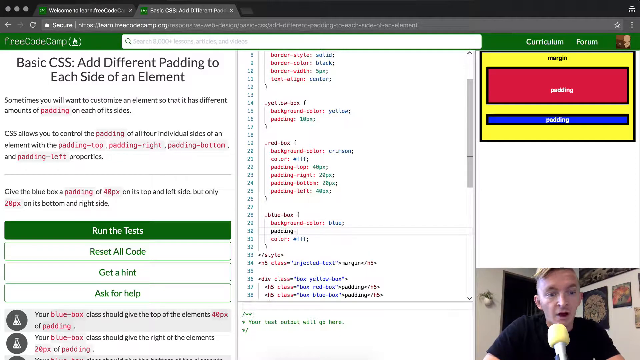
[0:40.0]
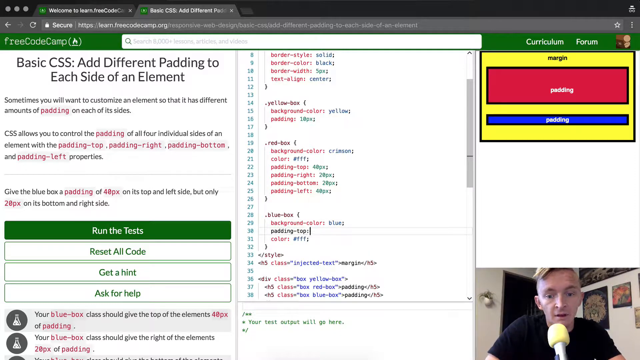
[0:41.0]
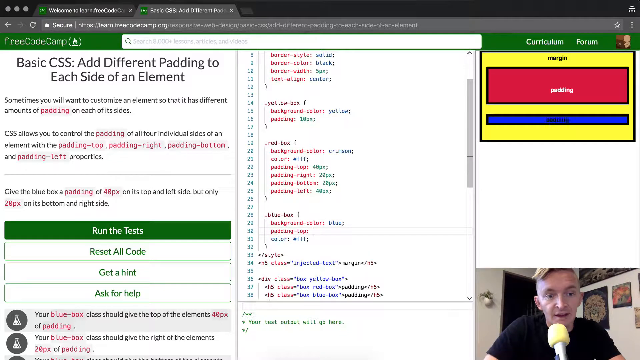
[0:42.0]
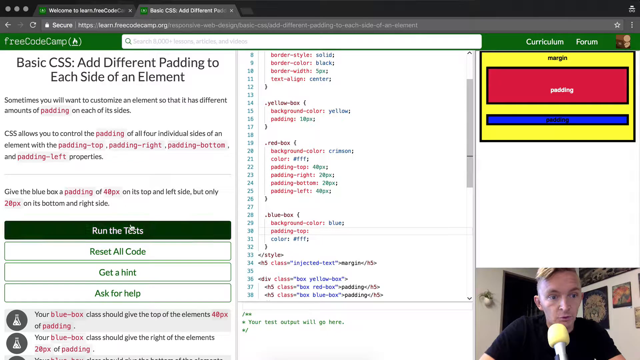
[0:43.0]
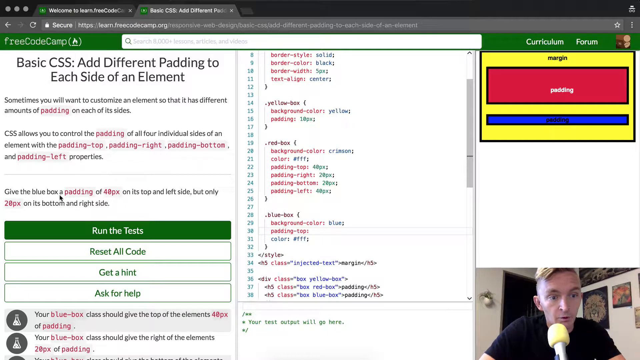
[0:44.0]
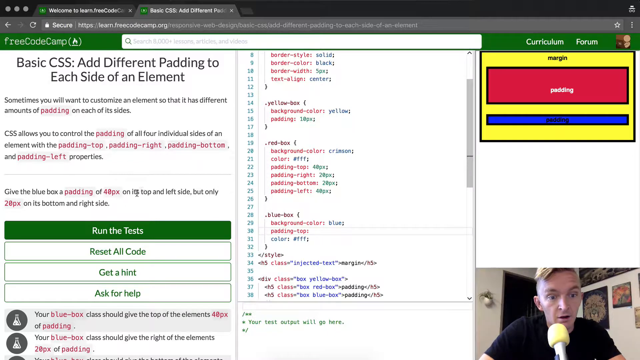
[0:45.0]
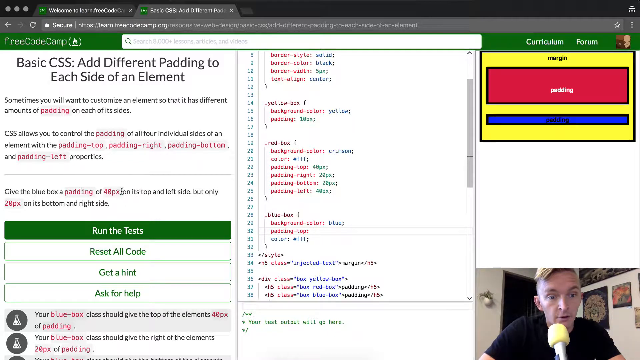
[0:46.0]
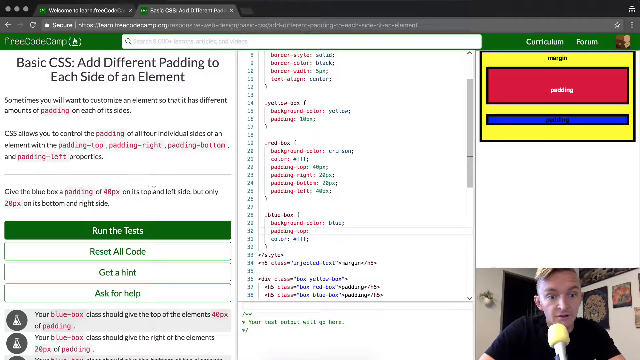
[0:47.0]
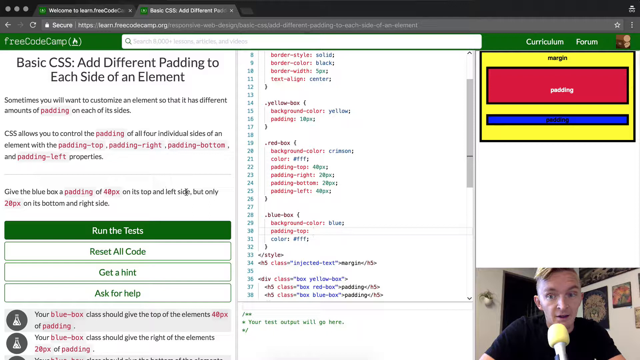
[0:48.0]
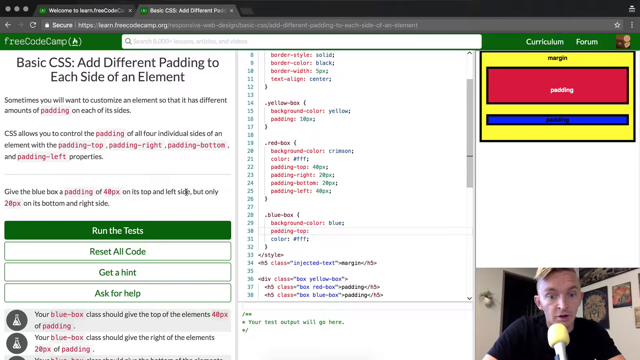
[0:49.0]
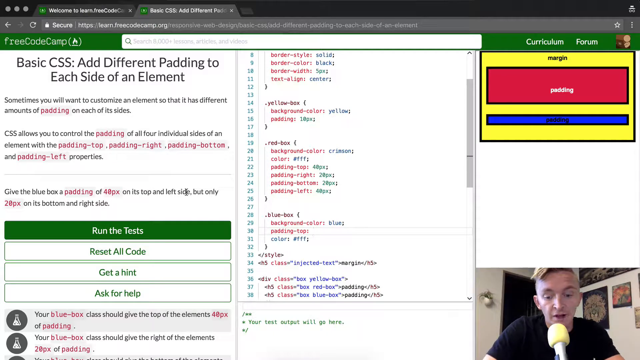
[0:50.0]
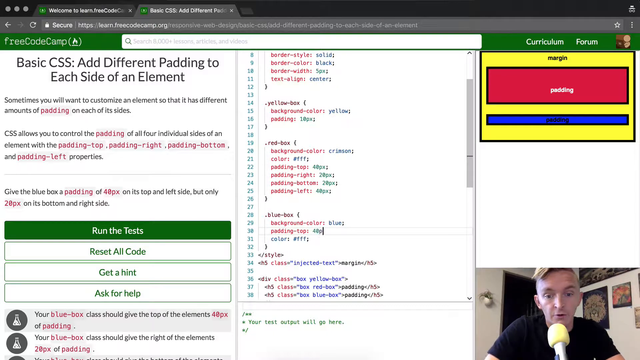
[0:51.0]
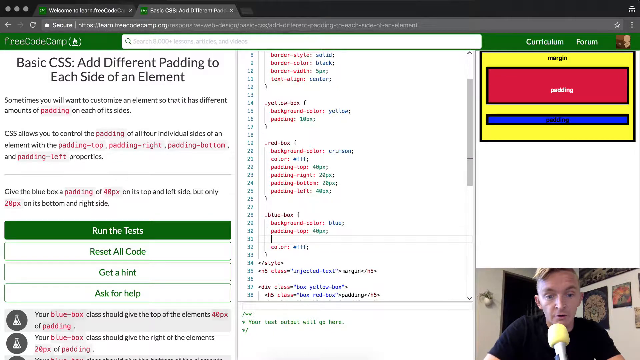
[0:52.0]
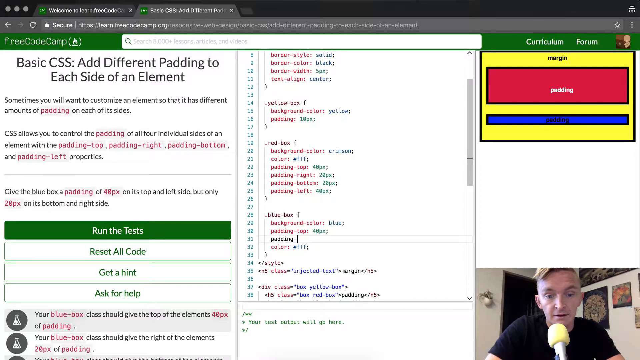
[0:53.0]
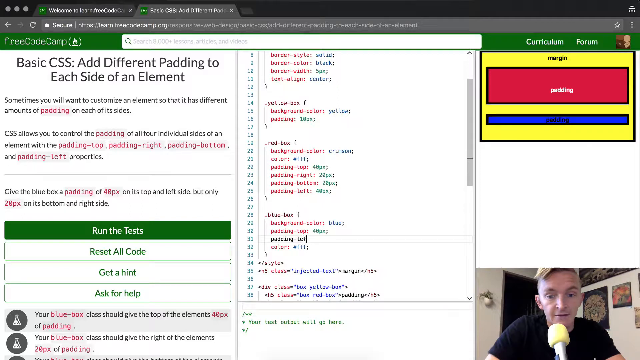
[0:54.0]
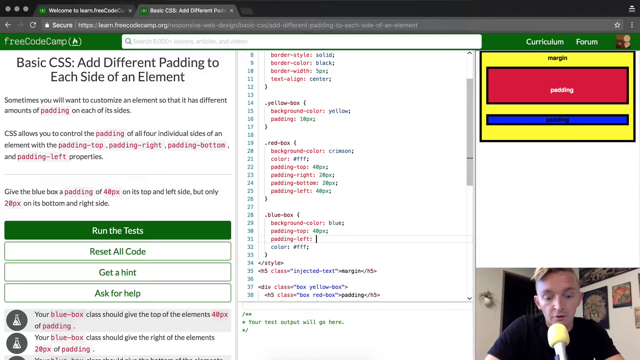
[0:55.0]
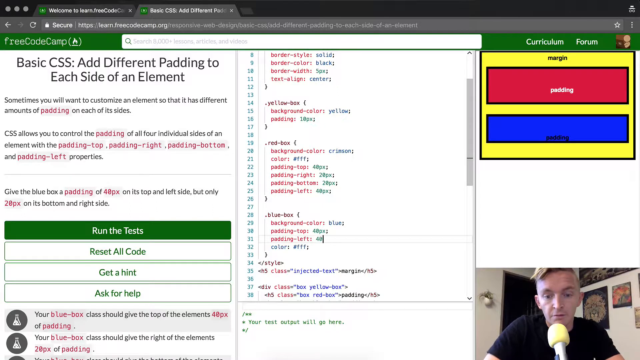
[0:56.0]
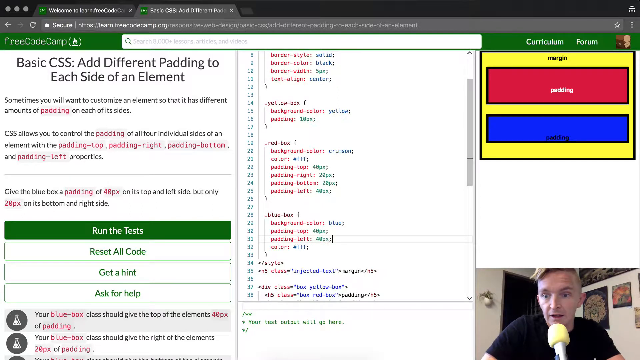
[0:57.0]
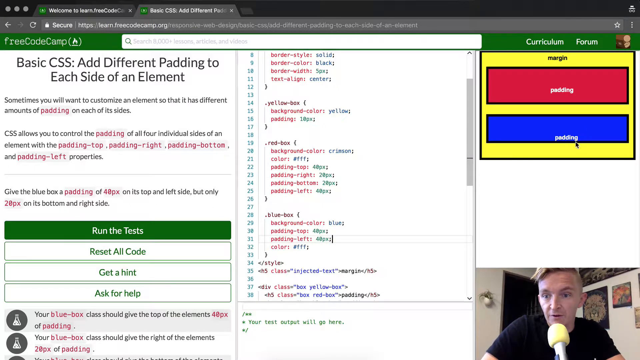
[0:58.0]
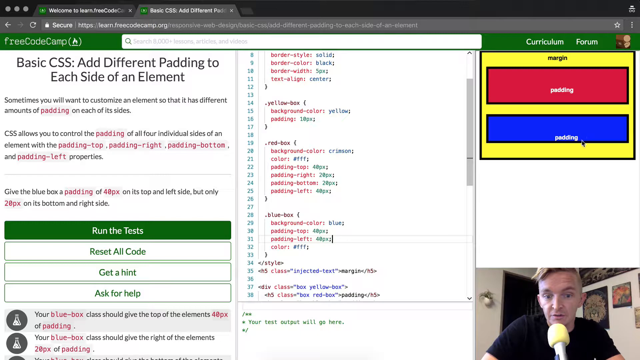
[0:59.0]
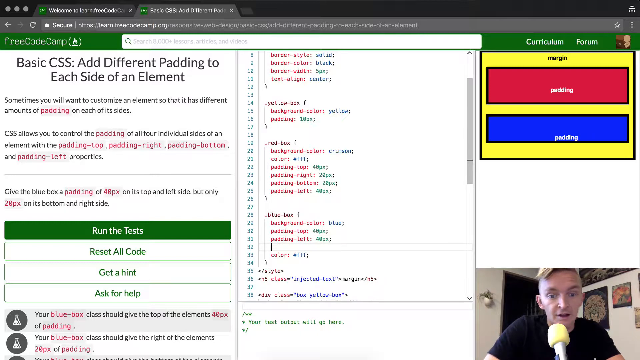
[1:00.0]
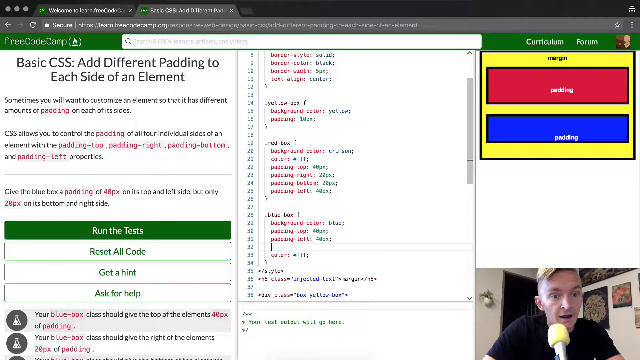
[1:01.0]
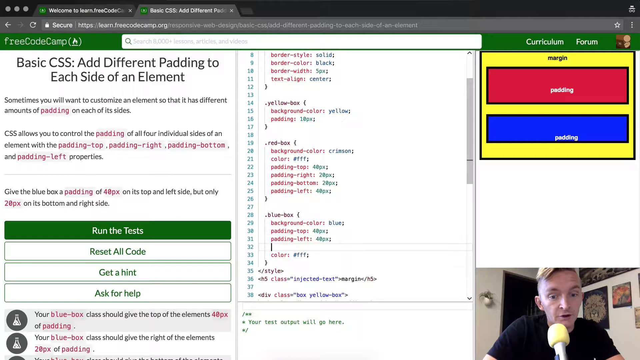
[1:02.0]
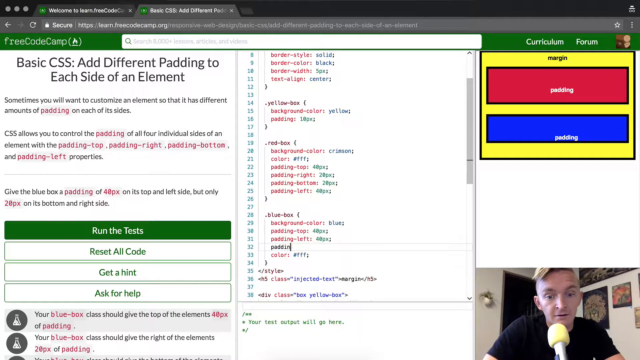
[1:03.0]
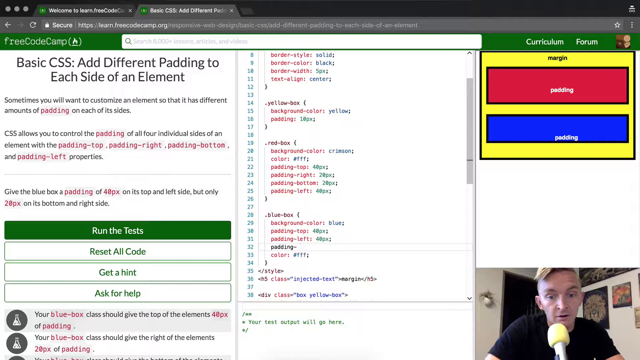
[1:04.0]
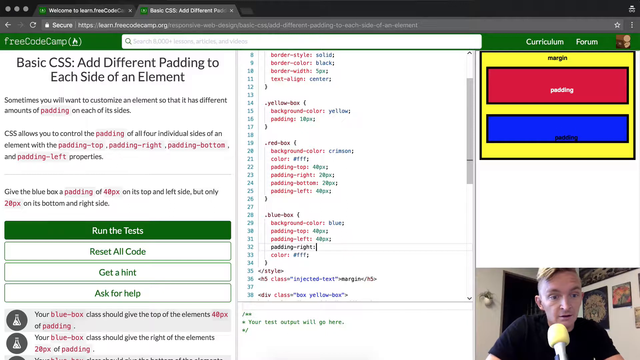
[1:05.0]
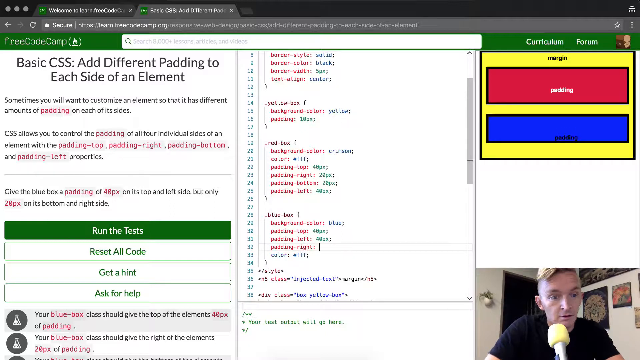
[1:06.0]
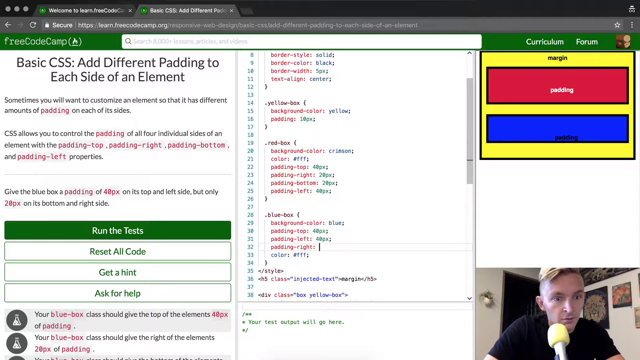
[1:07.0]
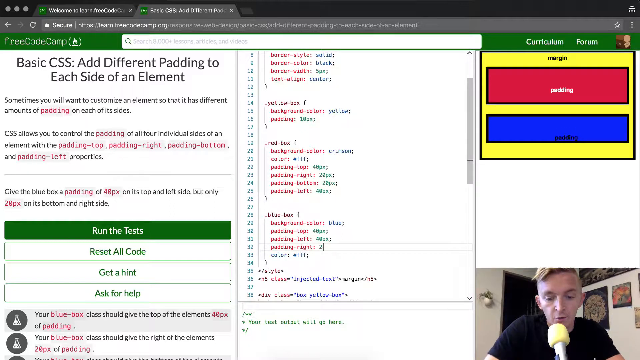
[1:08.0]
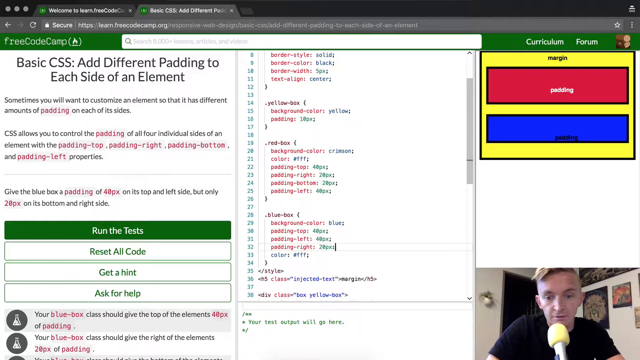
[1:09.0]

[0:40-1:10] The instructor enters new code, then refers back to the instructions with his cursor. He returns to the code, enters something new and continues typing. He moves up to the blue rectangle that says "padding," hovers over it with the mouse for a bit, then goes back down and enters padding/right into the code along with some parameters. The lines in the code panel are numbered and contain red and blue text. Based on the title, it looks like he is writing code to add different padding to each side of an element. On the left are the instructions and action boxes, the center holds the coding panel, the top right seems to show what his code is creating, and the bottom right shows a video of him.